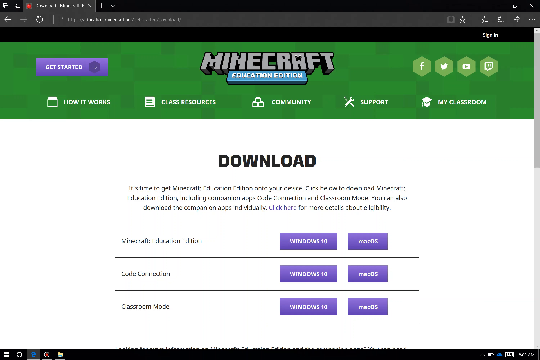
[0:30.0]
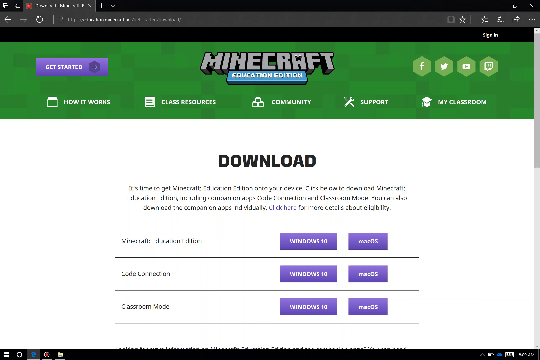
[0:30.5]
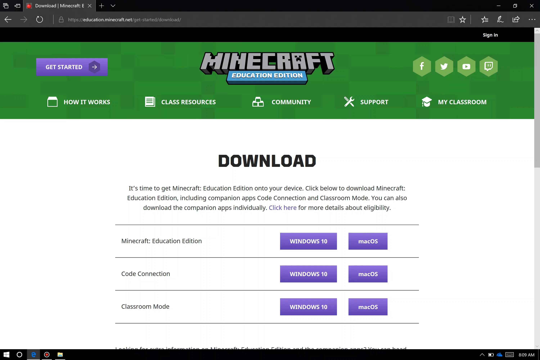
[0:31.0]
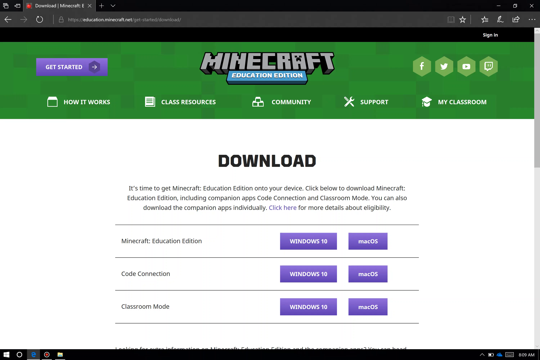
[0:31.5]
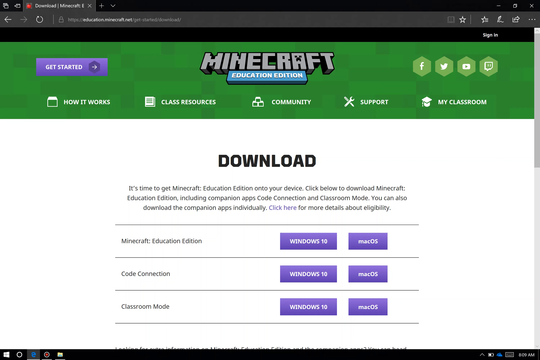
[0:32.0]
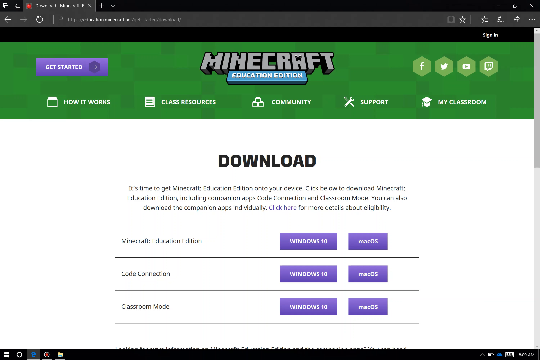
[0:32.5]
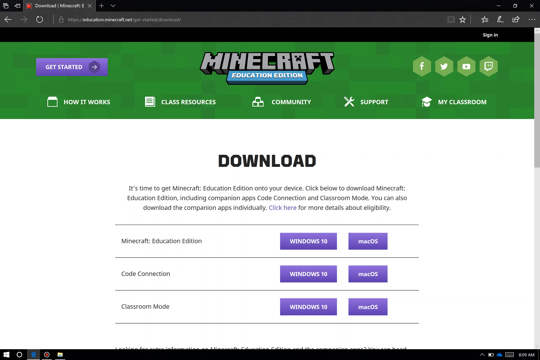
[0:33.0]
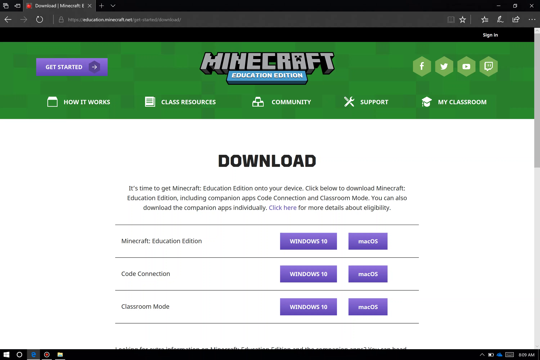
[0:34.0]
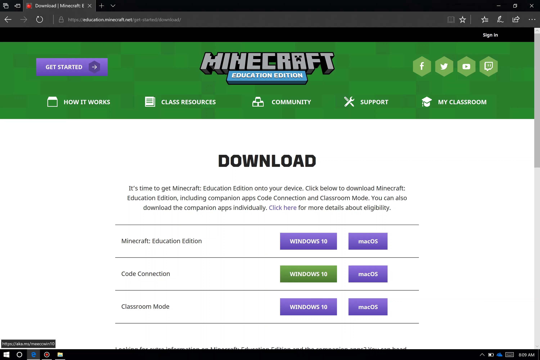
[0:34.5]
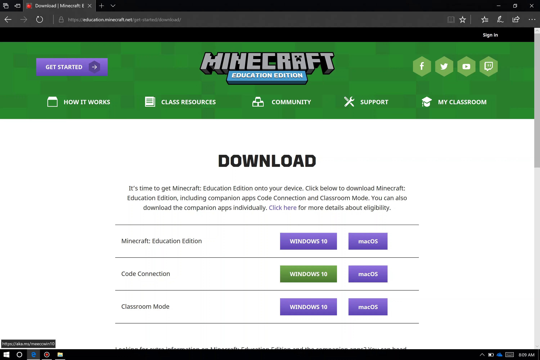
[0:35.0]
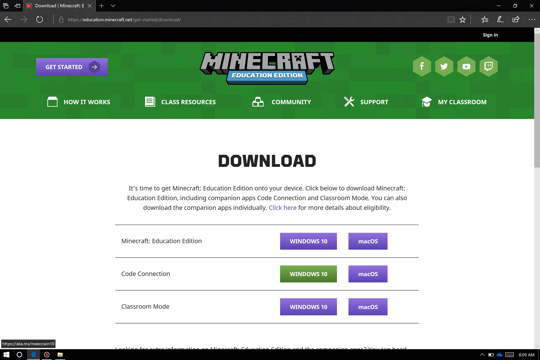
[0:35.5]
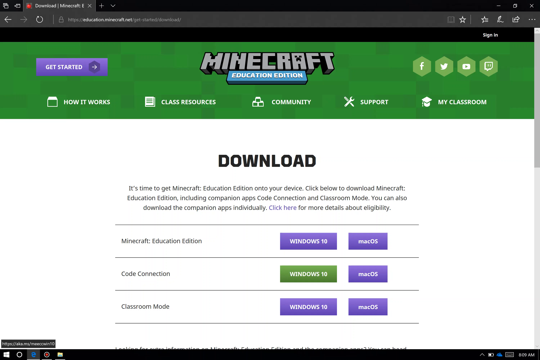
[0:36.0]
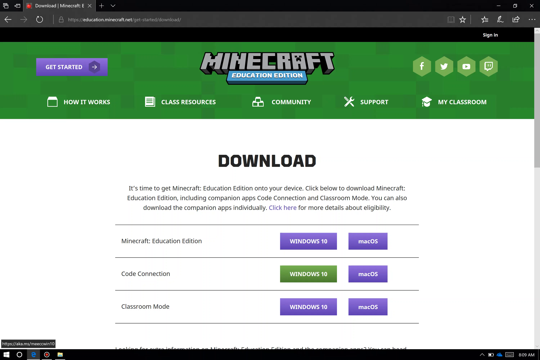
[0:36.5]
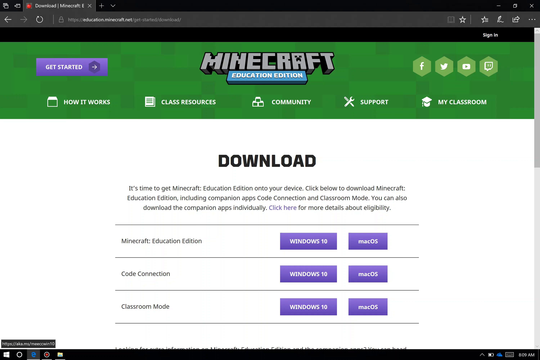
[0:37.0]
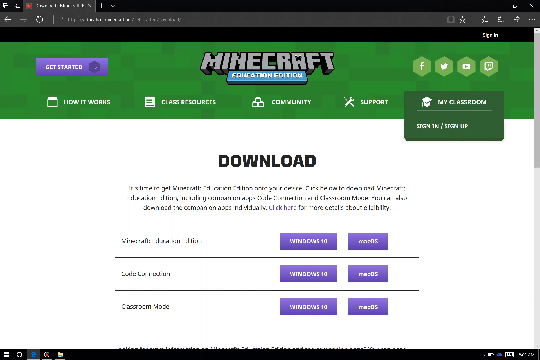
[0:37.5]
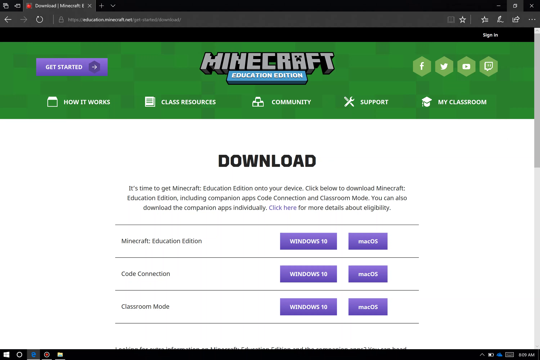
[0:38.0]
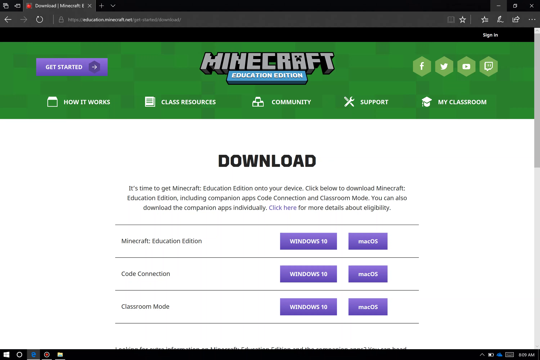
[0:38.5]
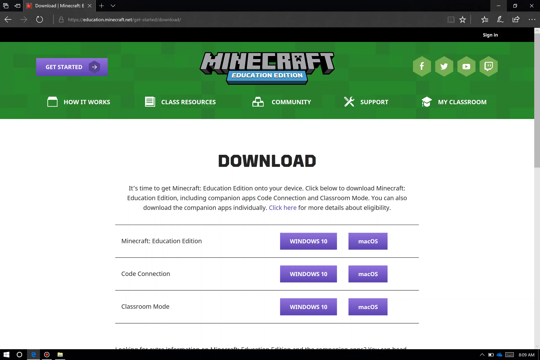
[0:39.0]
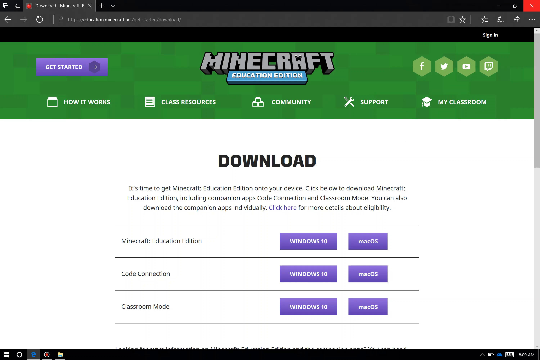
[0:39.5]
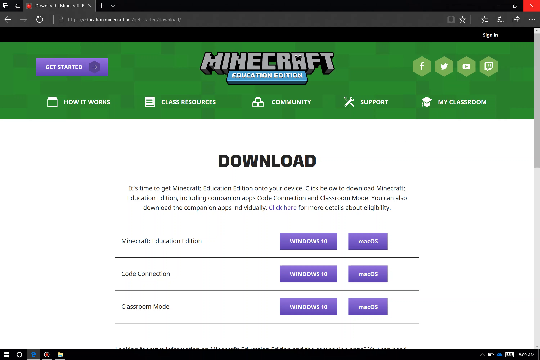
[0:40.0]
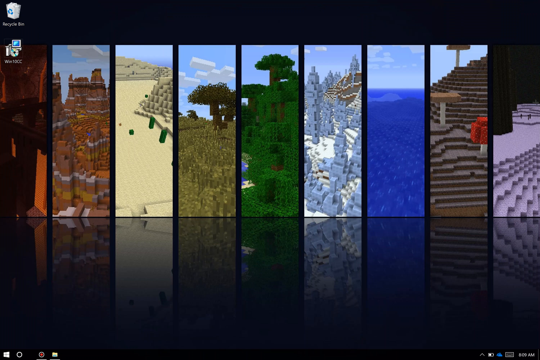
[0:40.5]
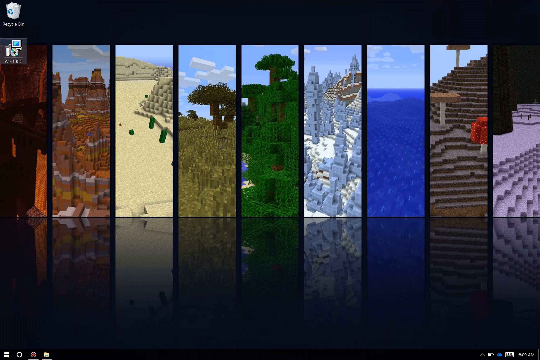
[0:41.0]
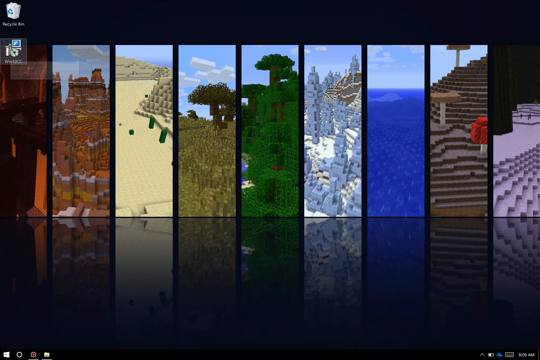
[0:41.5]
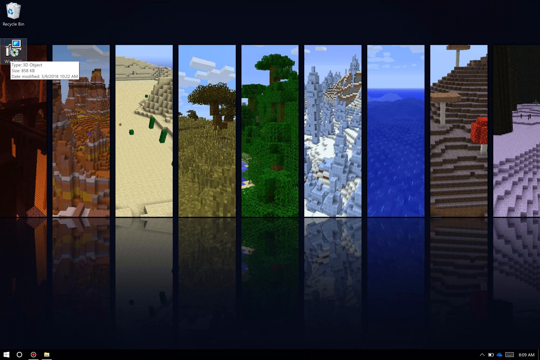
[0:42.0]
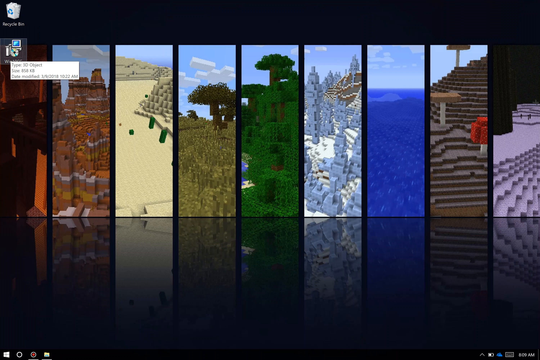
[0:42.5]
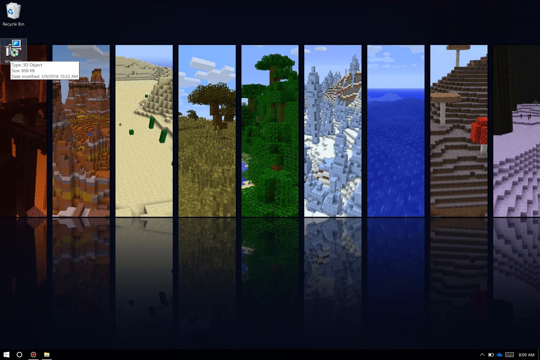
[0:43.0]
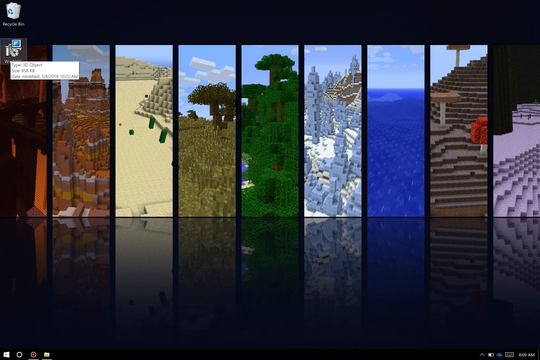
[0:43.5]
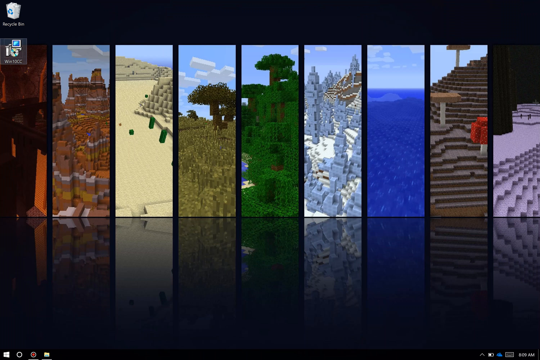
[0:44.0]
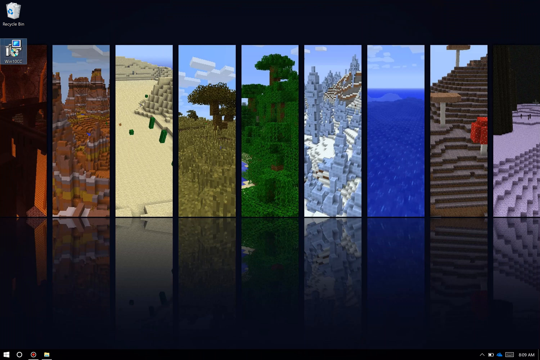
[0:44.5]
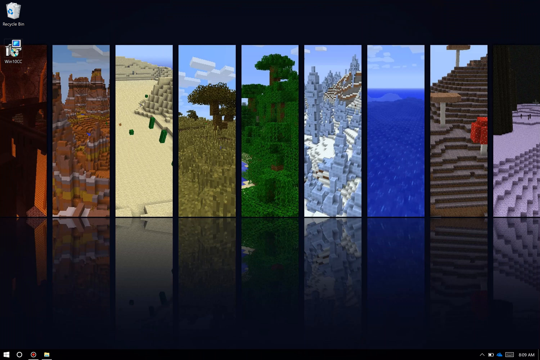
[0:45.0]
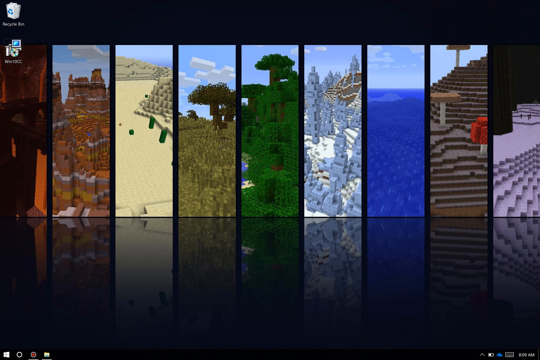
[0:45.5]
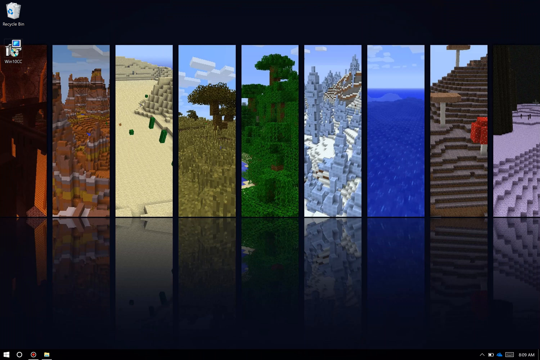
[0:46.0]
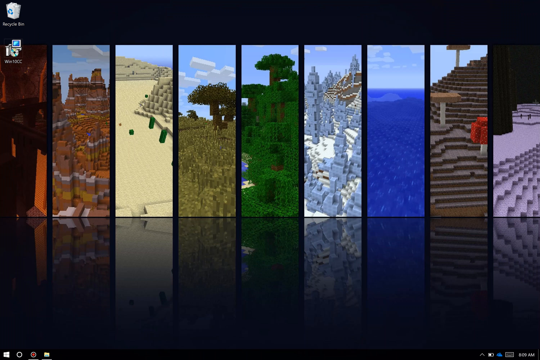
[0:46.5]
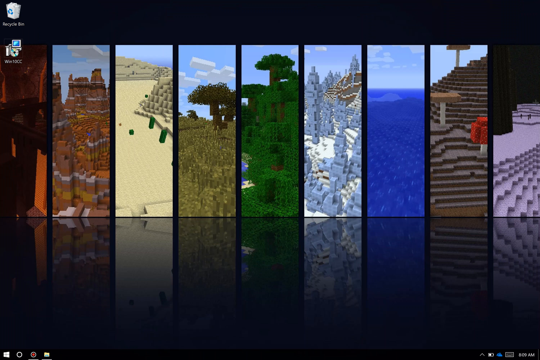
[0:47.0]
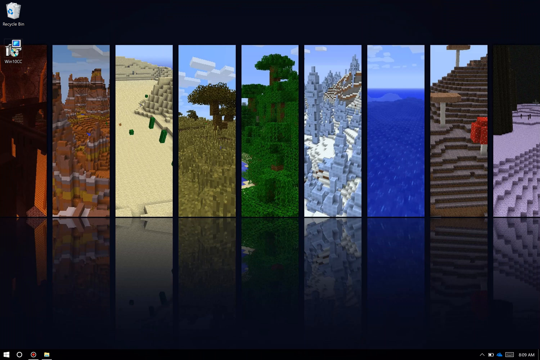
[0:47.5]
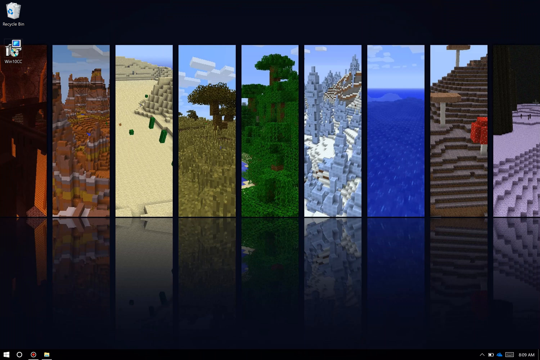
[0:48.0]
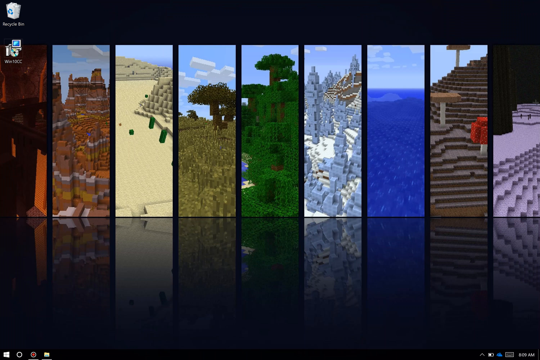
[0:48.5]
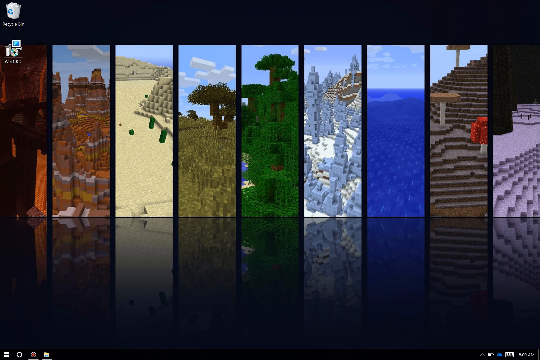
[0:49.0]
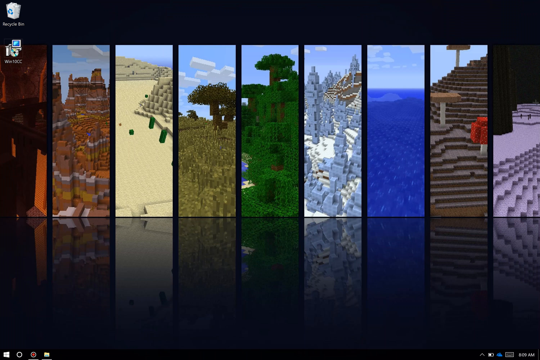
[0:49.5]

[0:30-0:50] The Minecraft Education Edition download page is on screen. The cursor moves around wildly, the window is closed, and he clicks on an installer that was already downloaded, apparently an application named WinSOCC. The desktop background shows nine Minecraft terrains. The first is lava, dark, with darkish rocks. The second is very mountainous, a lighter shade of brown with orange and yellow. The third is sandy and beach-like but without water, with some cacti growing out of the sand. The fourth is somewhat marshy, kind of like a tundra, foresty, in a darkish brown-green. The middle one is a luscious green, with many trees growing along a body of water, more like a rainforest.